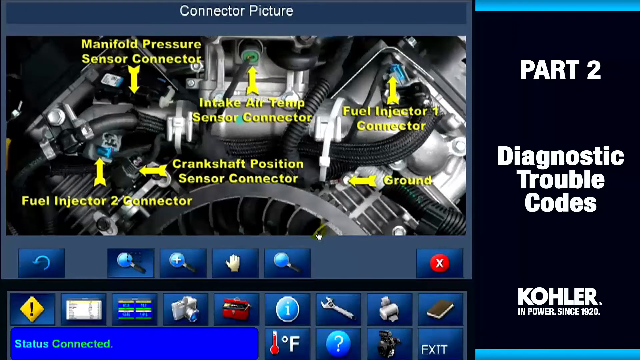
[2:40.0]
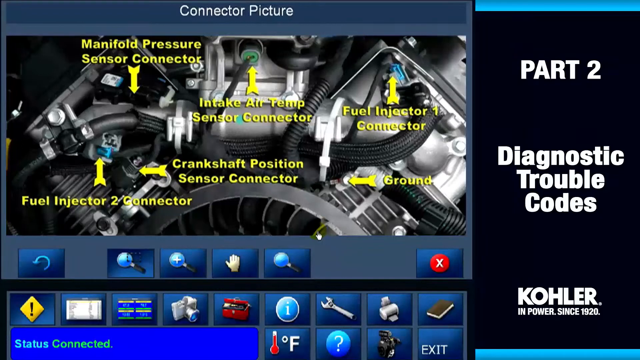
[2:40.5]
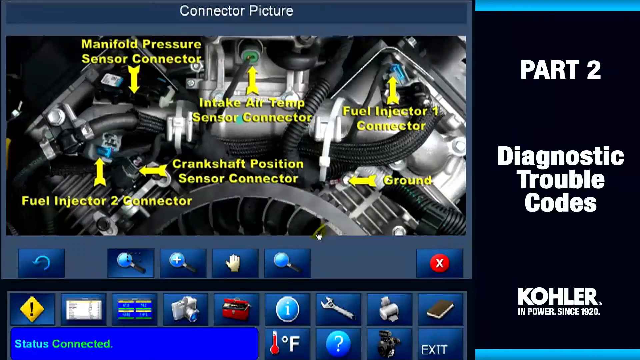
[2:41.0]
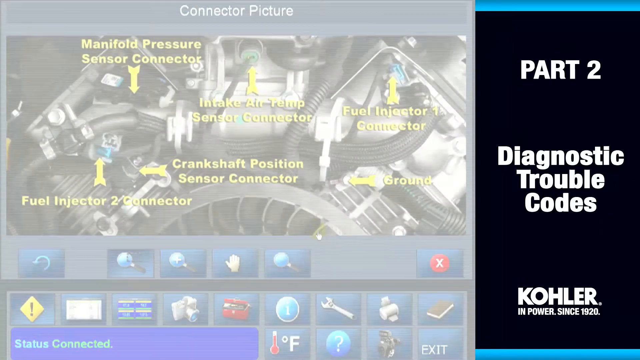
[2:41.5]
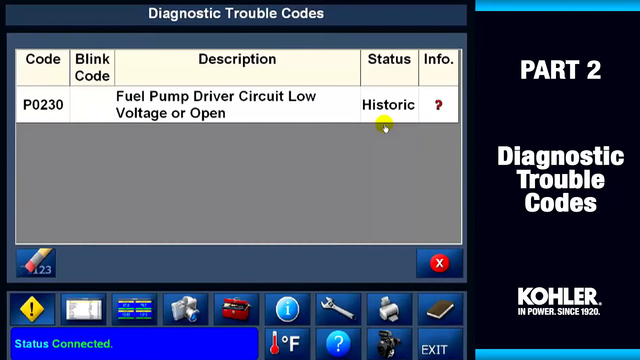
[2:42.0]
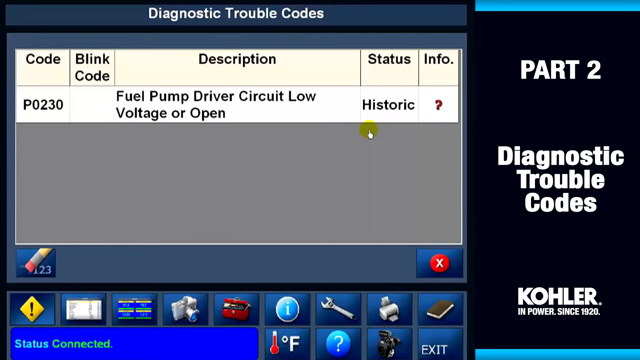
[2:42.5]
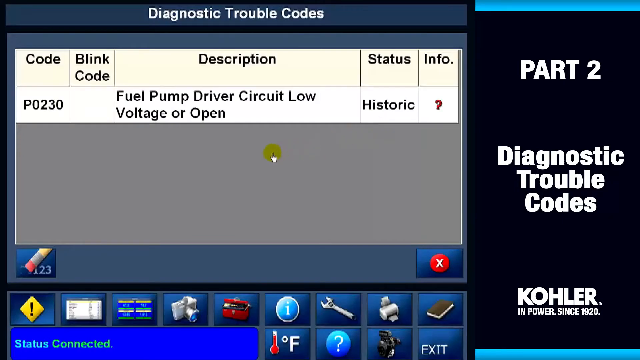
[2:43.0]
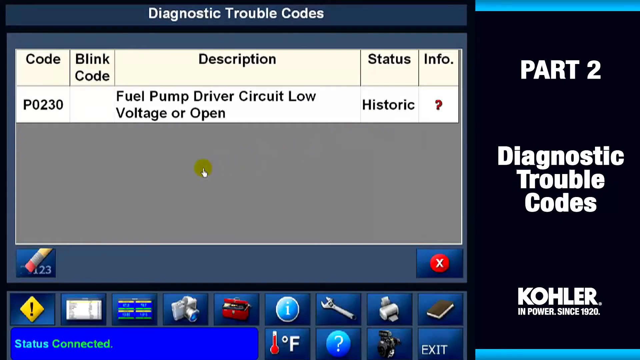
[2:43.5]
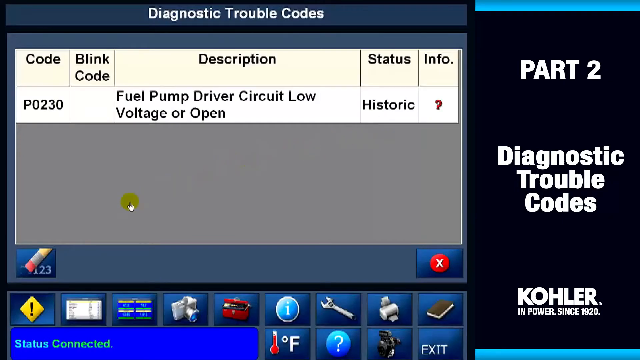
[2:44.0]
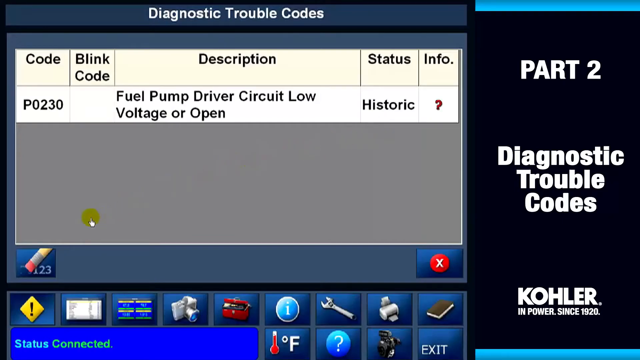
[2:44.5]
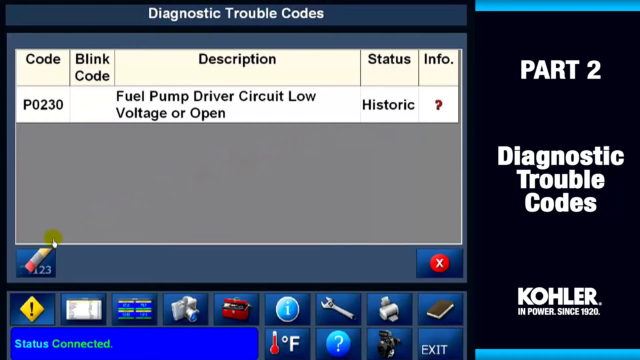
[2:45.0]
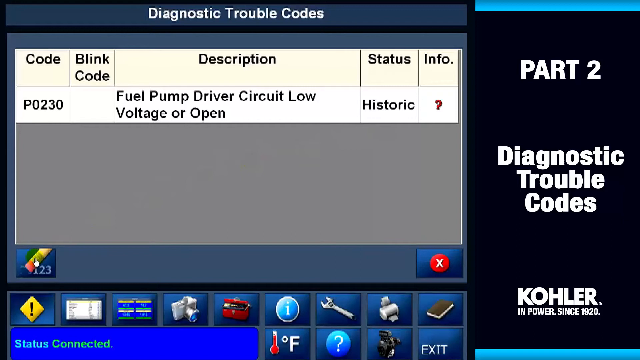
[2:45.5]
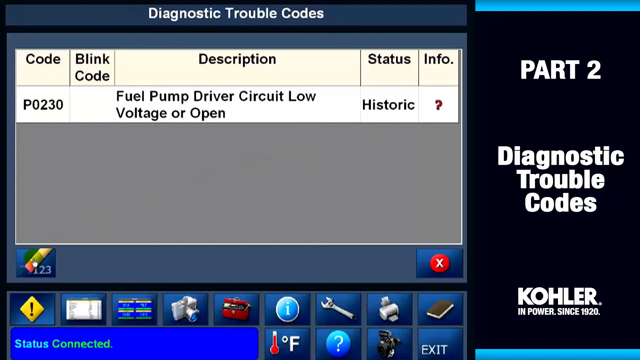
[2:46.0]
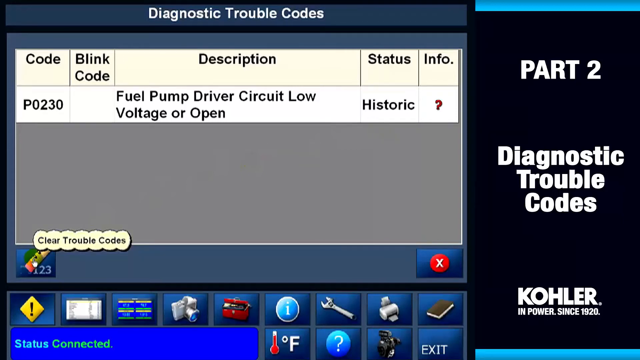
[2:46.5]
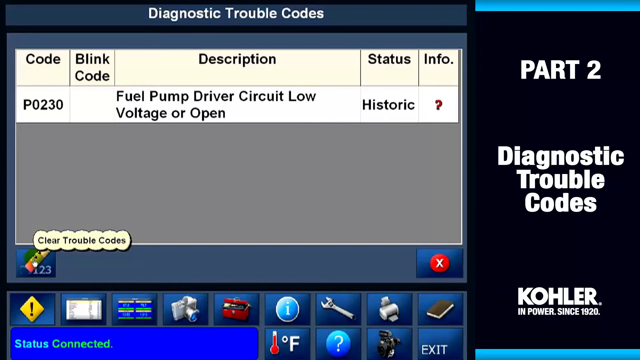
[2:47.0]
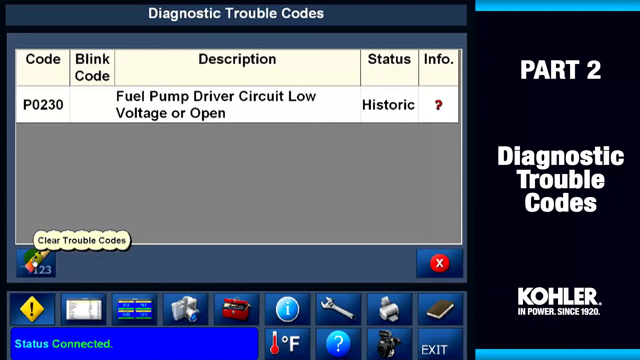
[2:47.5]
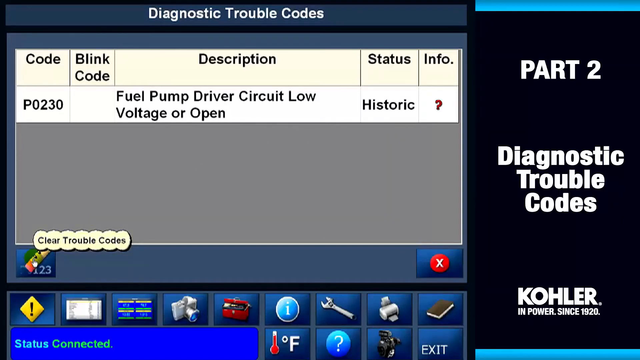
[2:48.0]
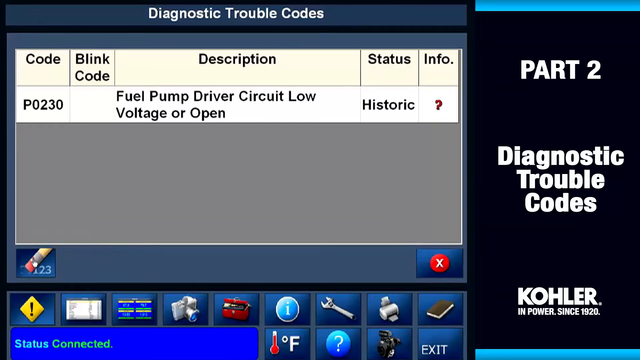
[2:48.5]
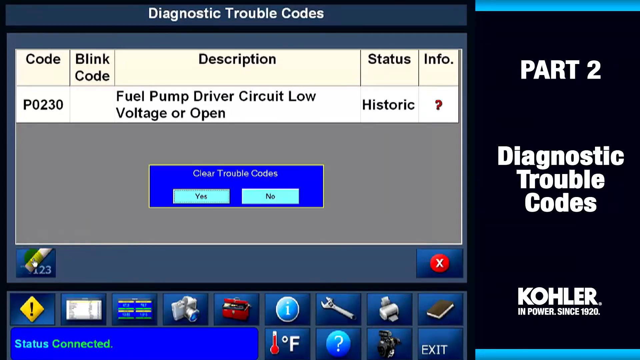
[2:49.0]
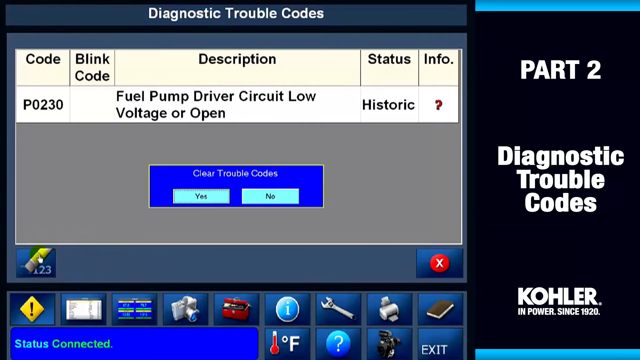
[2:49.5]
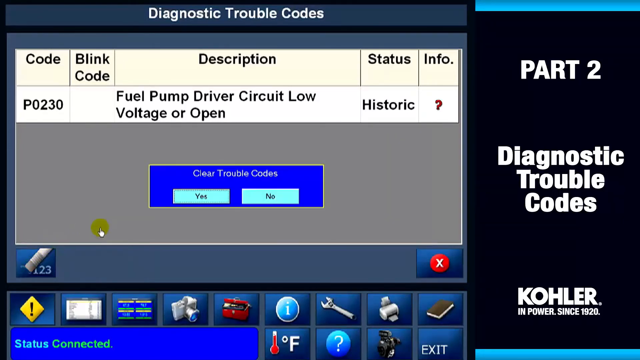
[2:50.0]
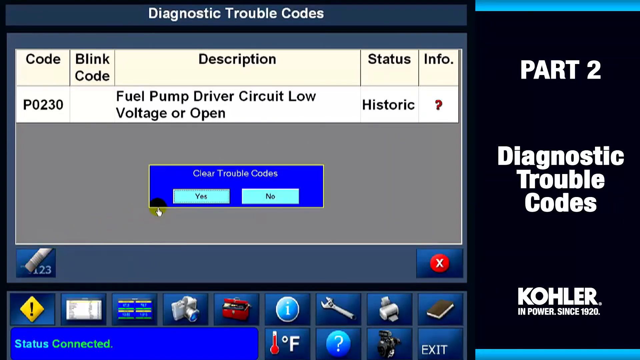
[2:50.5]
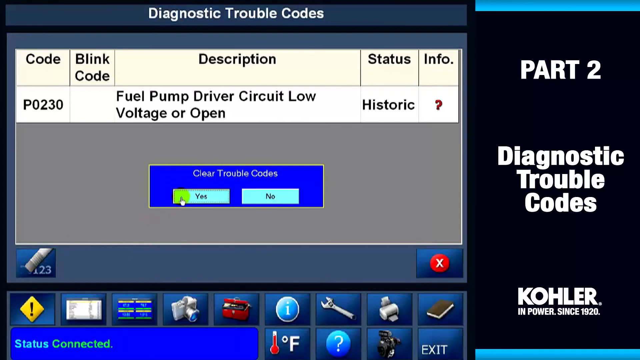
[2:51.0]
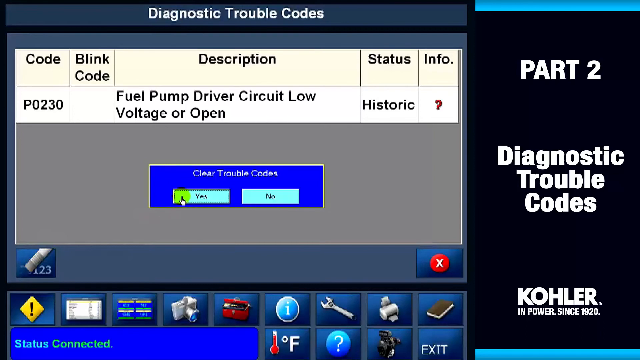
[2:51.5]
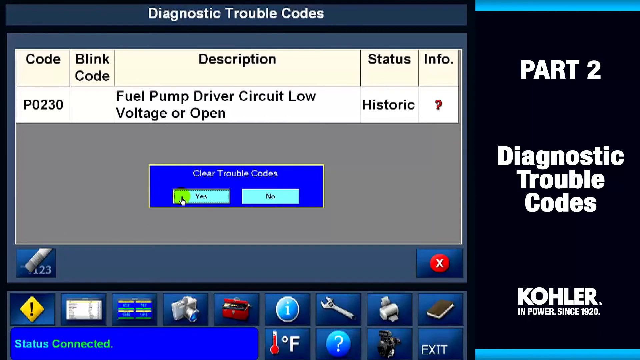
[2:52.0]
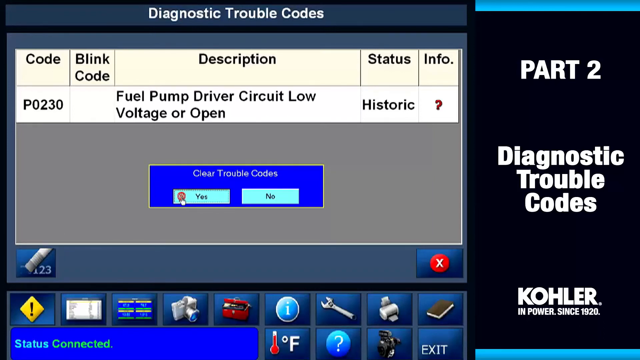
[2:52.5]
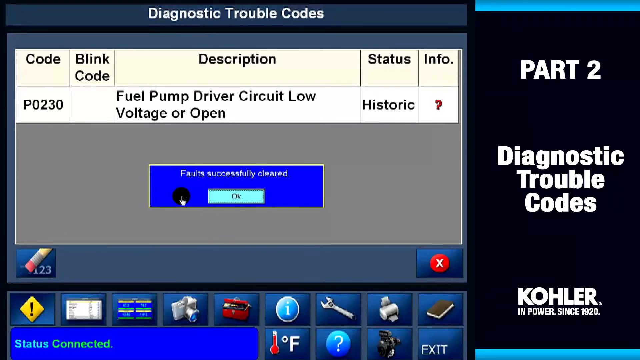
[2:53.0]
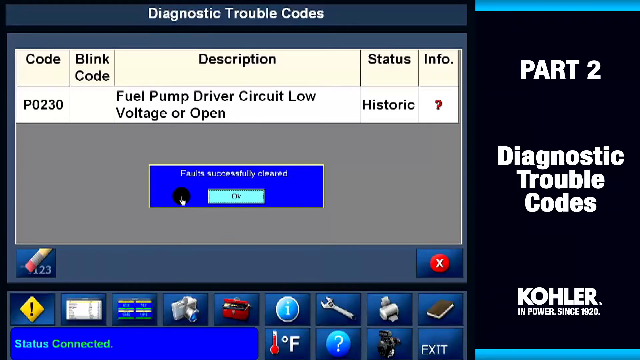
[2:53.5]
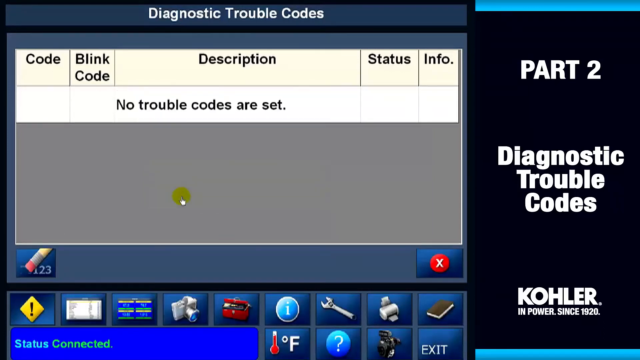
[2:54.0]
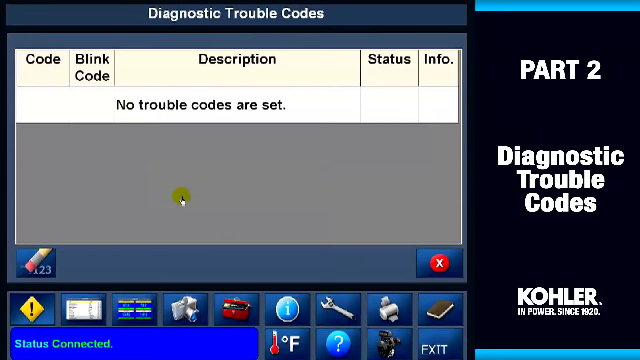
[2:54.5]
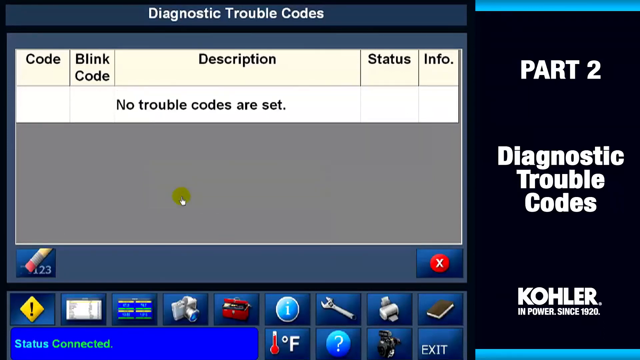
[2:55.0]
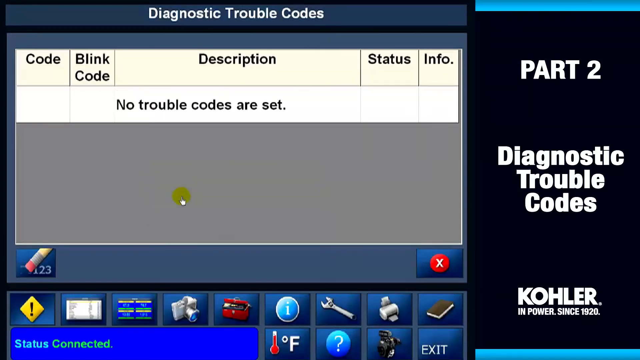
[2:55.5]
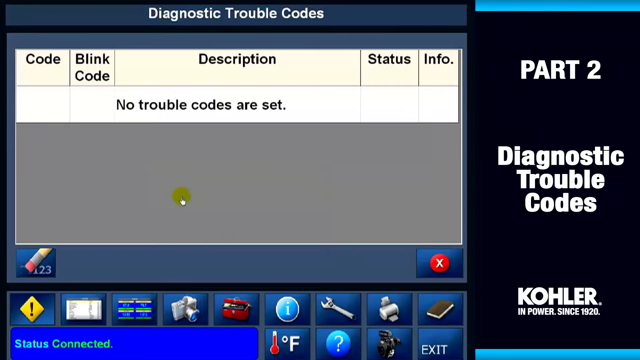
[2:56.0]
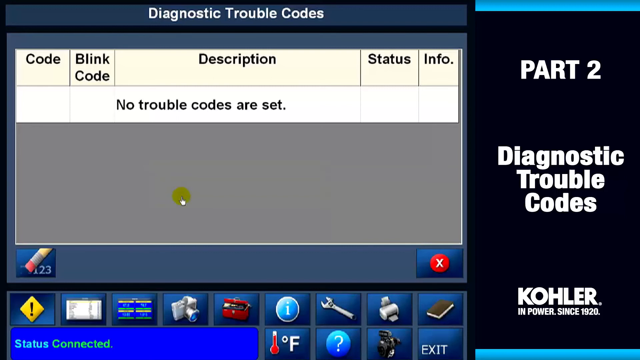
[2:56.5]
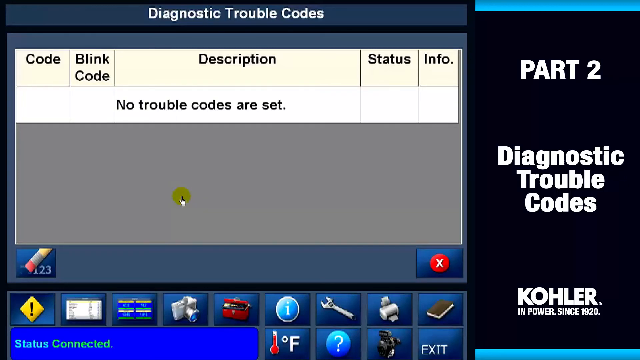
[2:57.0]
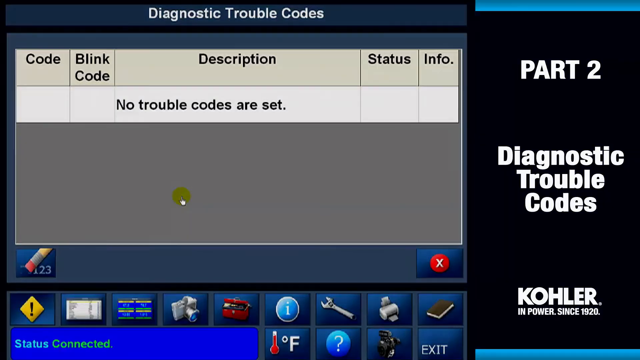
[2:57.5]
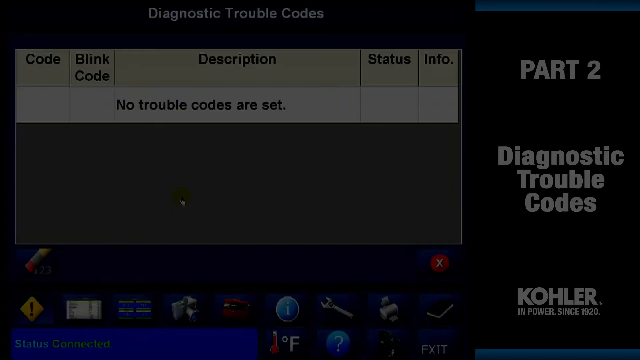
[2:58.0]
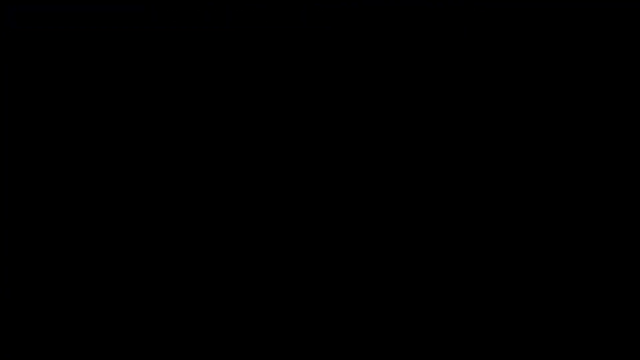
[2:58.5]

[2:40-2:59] The "Connector picture" screen shows "Manifold pressure sensor connector", "Air intake temp sensor connector", "Fuel injector one connector", "Fuel injector two connector" and "Crankshaft position sensor connector", with an arrow labeled "Ground". The view then goes to the diagnostic trouble codes page showing code "P0230", "Fuel pump driver circuit low voltage or open", "Status historic" and "Info" with a question mark. A prompt asks yes or no whether to clear the code, and yes is clicked. The screen reads "Fault successfully cleared" and then "No trouble codes are set".